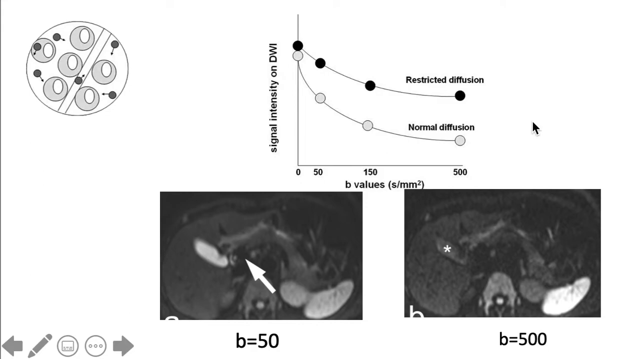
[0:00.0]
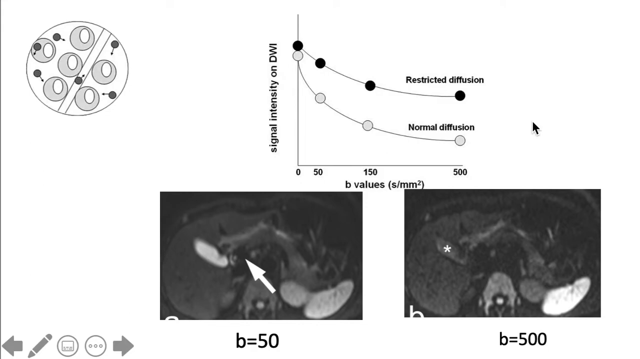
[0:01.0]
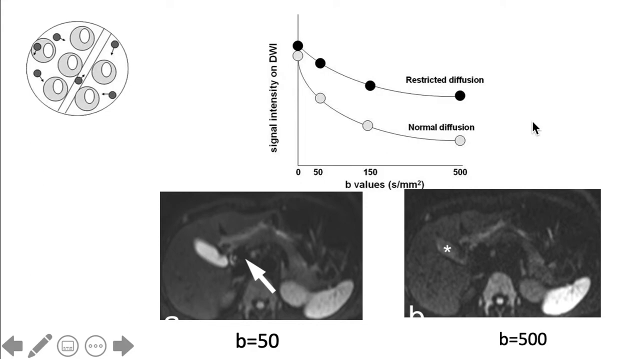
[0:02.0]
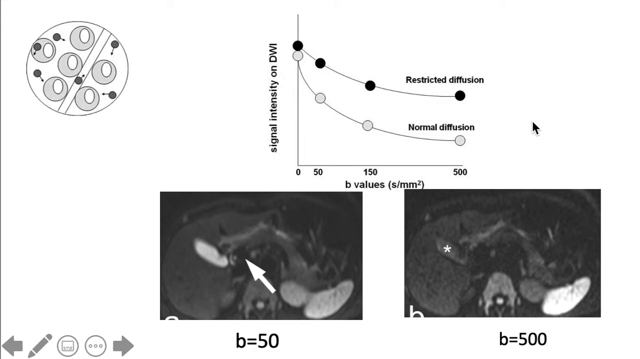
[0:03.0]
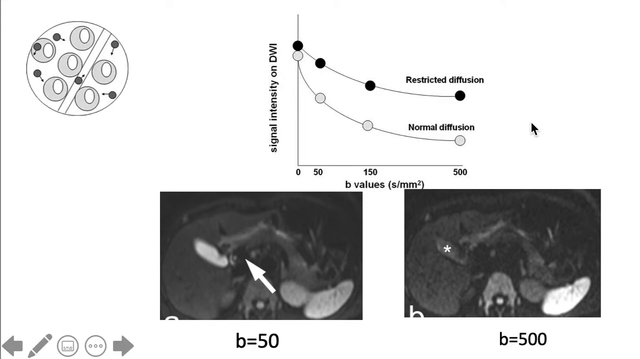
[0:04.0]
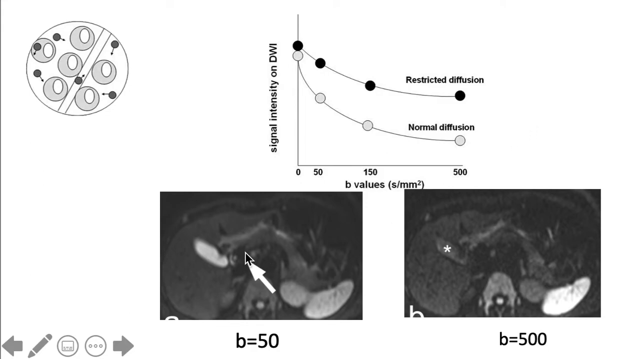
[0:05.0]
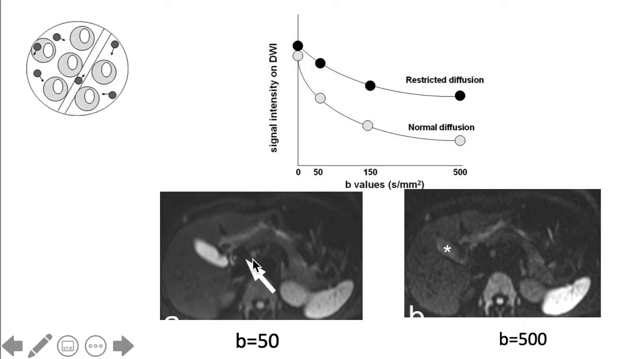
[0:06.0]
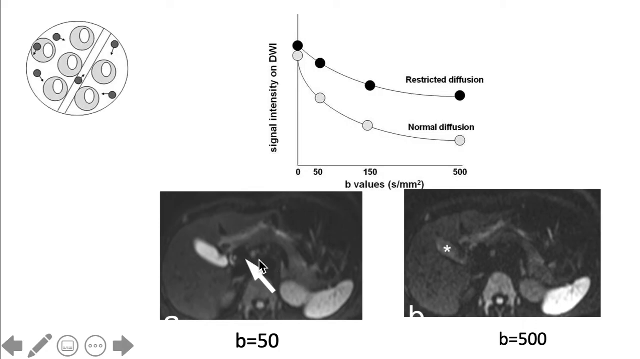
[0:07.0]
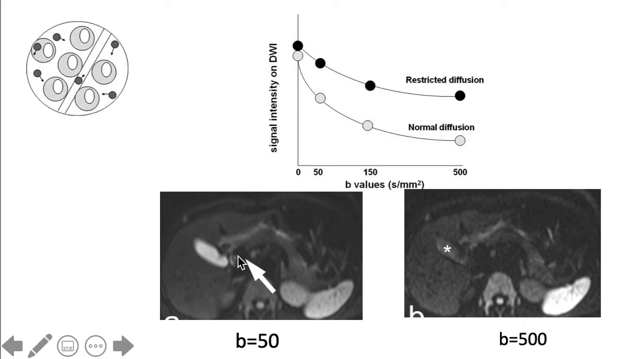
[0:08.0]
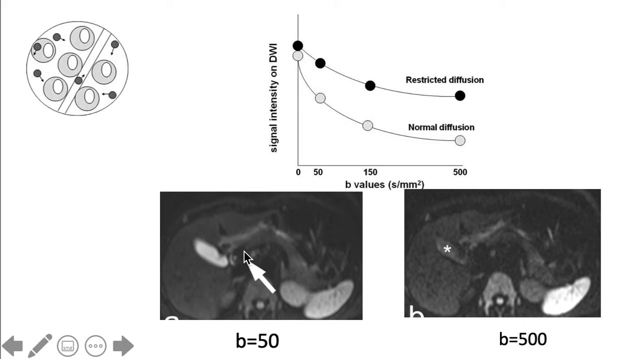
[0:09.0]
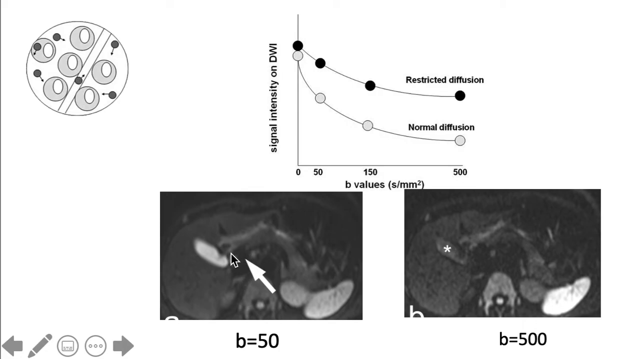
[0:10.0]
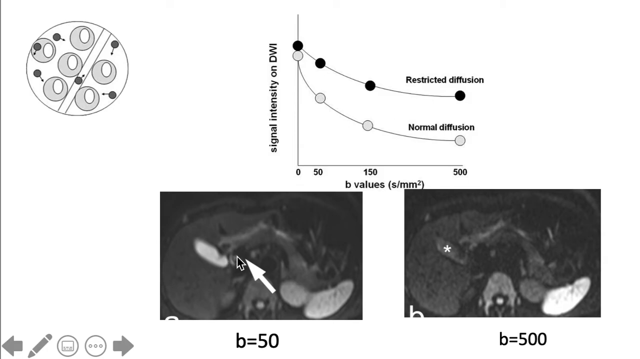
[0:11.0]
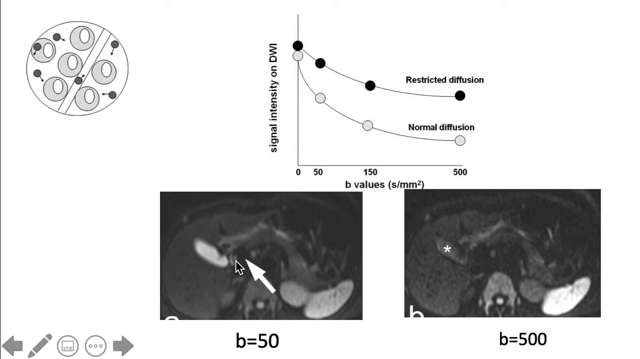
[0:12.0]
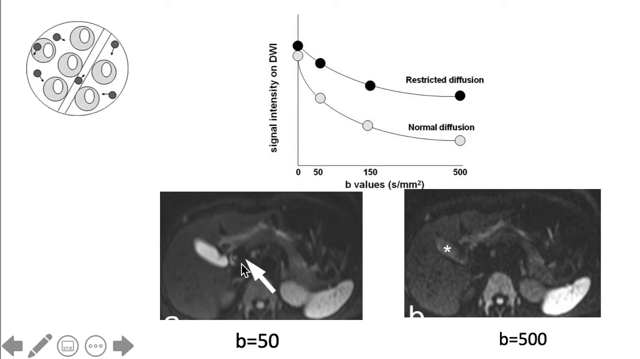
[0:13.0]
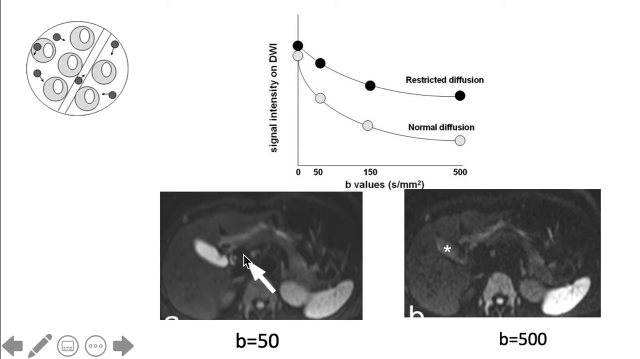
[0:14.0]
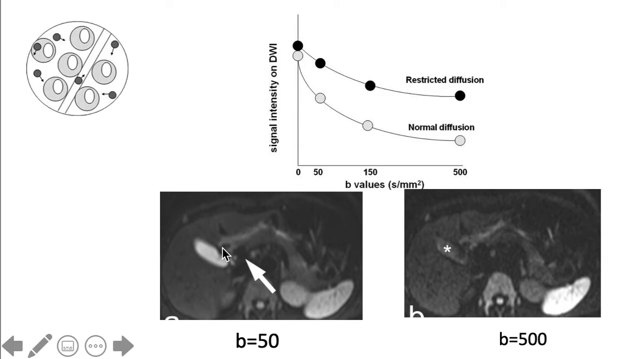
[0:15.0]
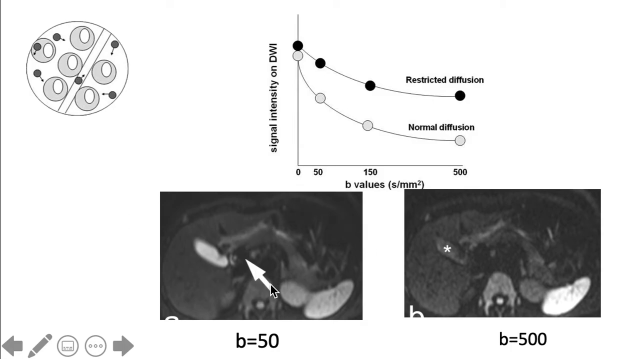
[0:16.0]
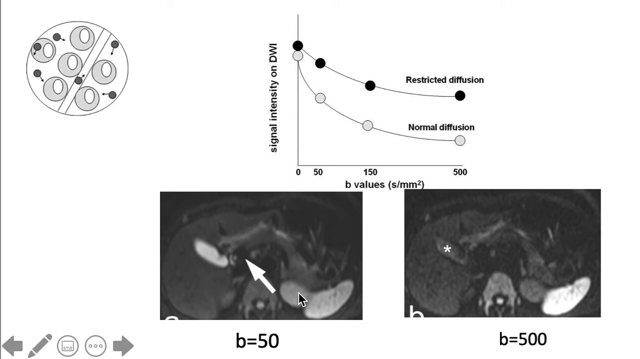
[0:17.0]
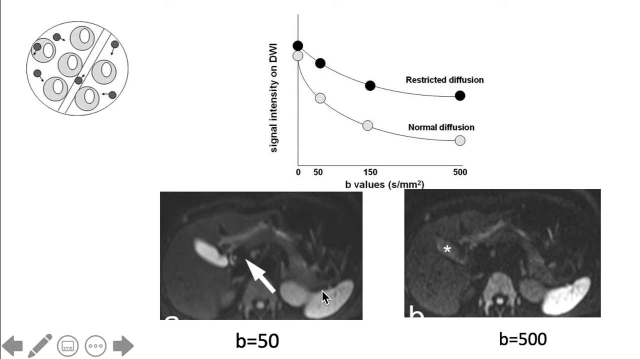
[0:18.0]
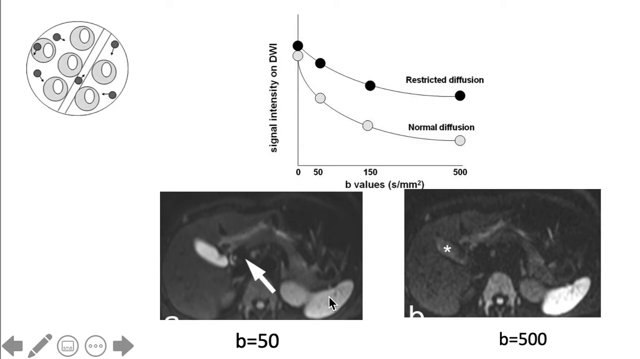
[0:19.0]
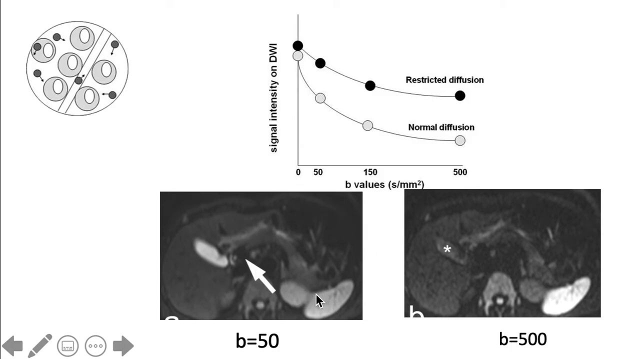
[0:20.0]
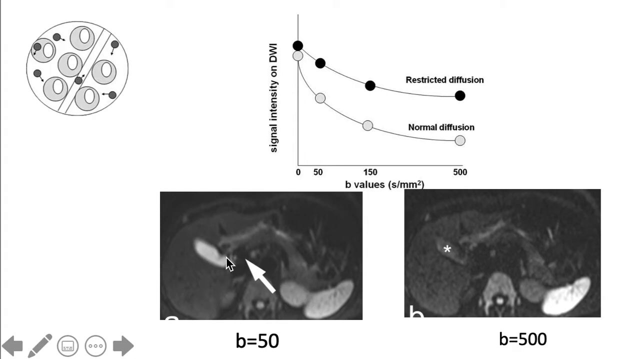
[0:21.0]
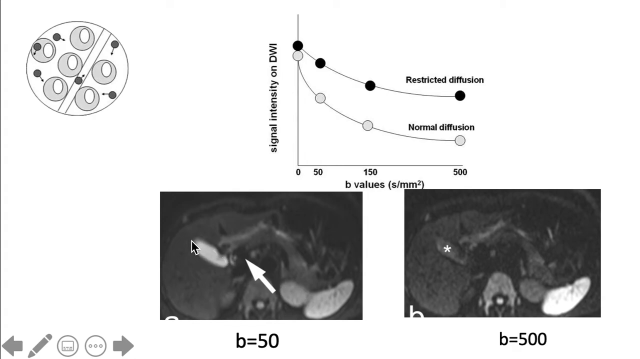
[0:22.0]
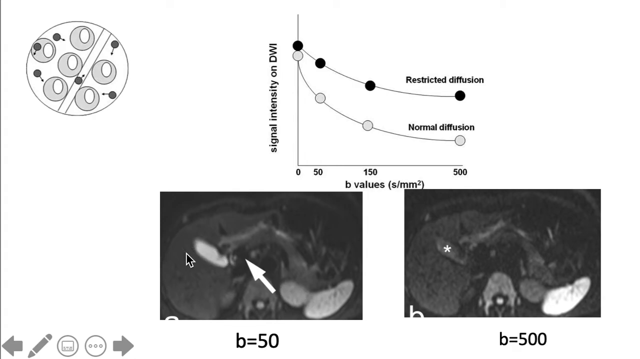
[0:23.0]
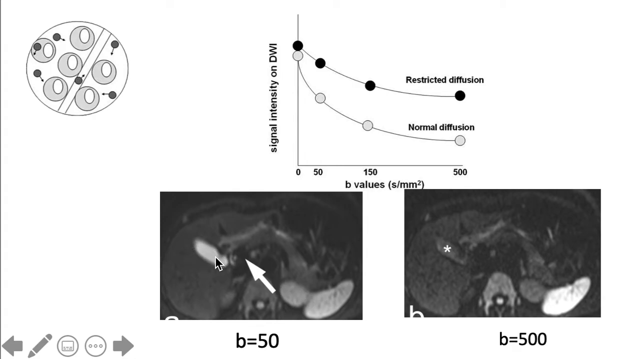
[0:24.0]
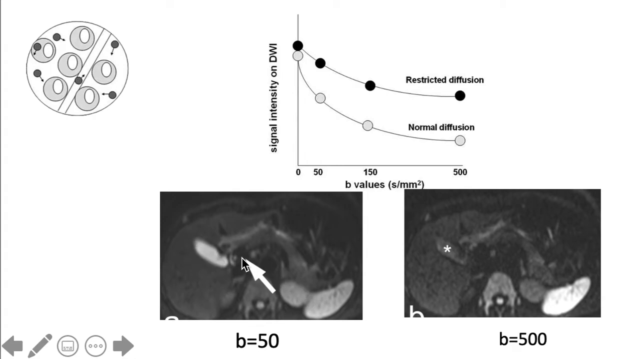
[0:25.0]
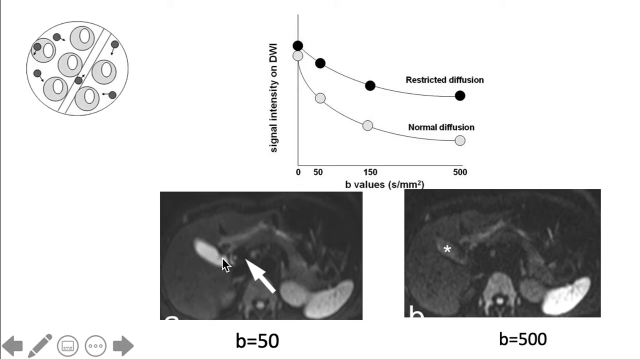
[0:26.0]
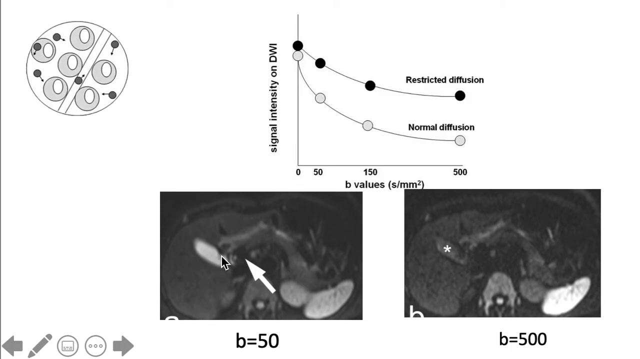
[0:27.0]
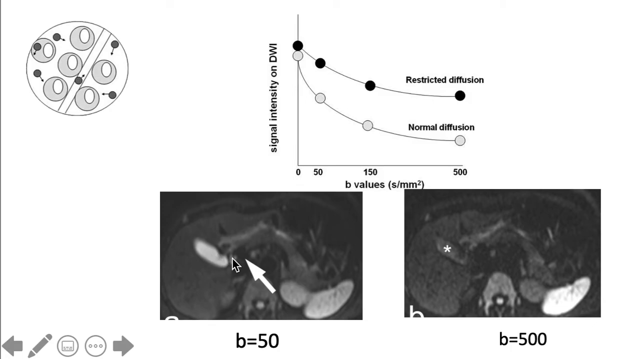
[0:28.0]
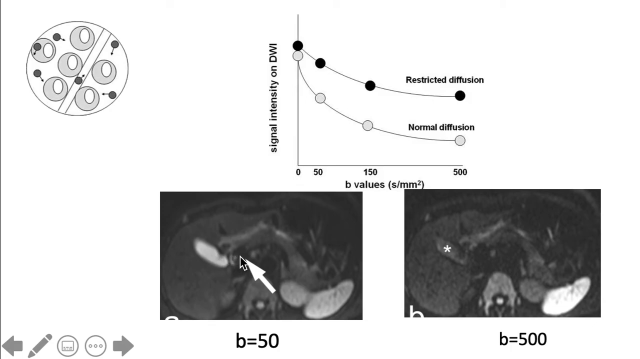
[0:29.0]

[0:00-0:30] Gray diagrams are set against a white background. A small graph carries labels reading "restricted diffusion" and "normal diffusion," and there are x-rays with arrows pointing to certain areas. It appears to be a screen recording, since a mouse hovers around certain areas of the x-rays. In the bottom left-hand corner of the screen are a gray arrow pointing left, a gray arrow pointing right, a gray pencil icon, a circle with three dots inside, and another circle with a small icon inside. In the upper left-hand corner is a circle containing several smaller circles; some are dark gray, and others are light gray with white hollow centers. On the graph, the y-axis reads "signal intensity on DWI" and the x-axis reads "B values," and several dots are linked together.